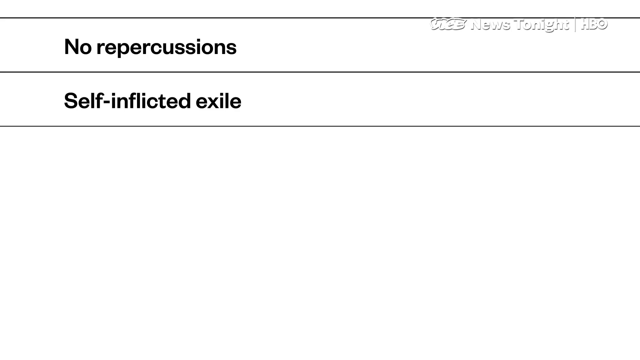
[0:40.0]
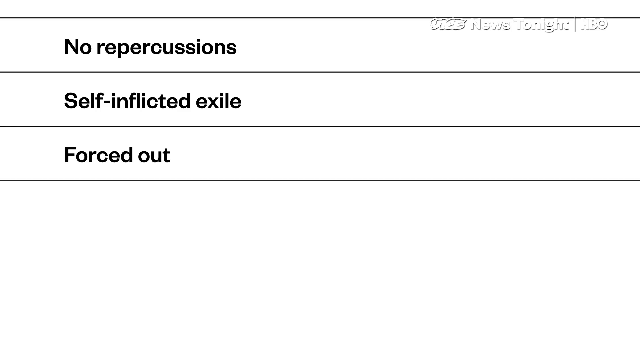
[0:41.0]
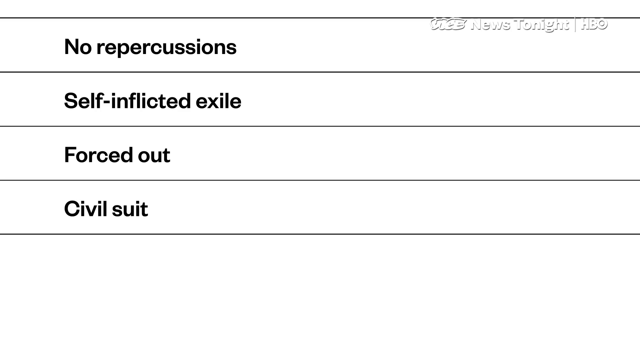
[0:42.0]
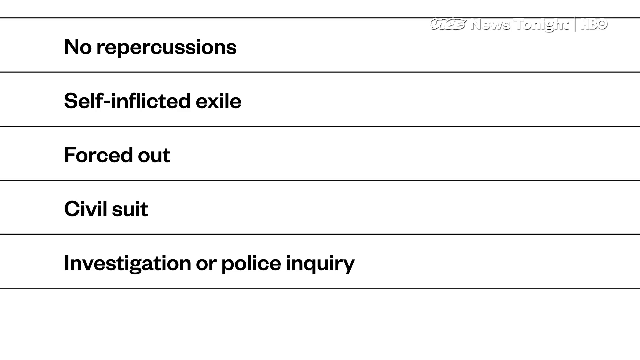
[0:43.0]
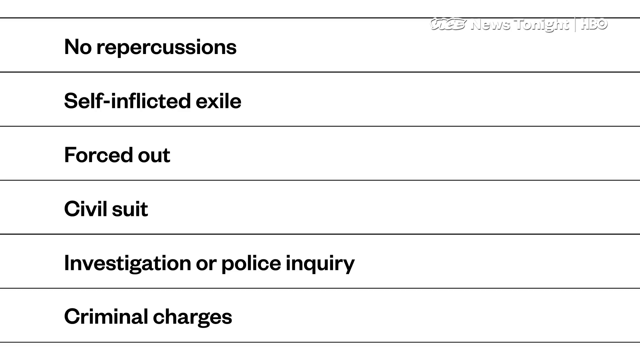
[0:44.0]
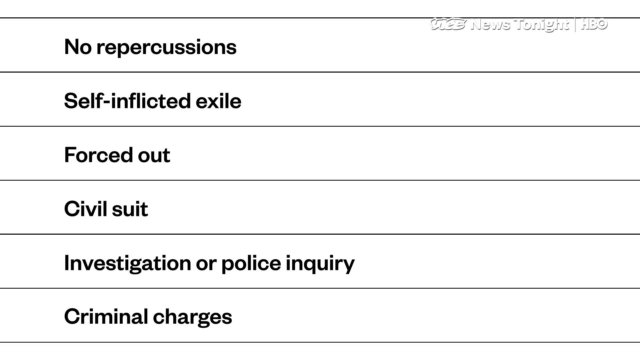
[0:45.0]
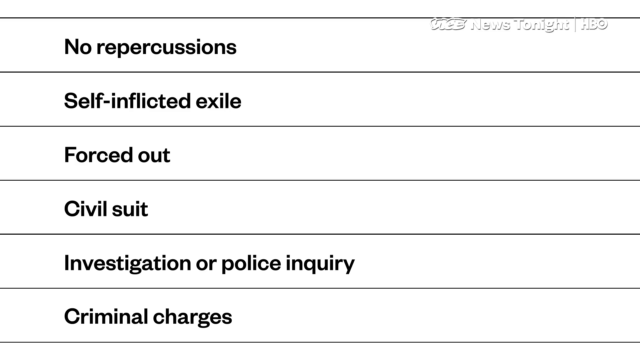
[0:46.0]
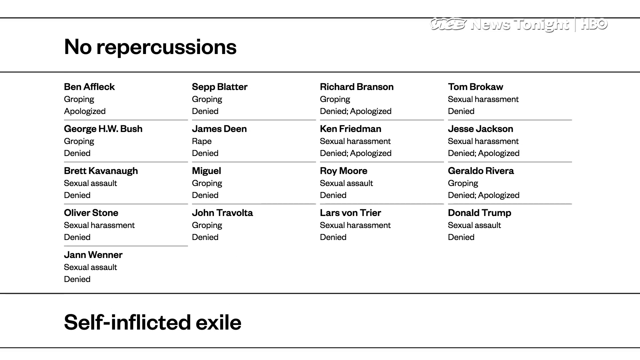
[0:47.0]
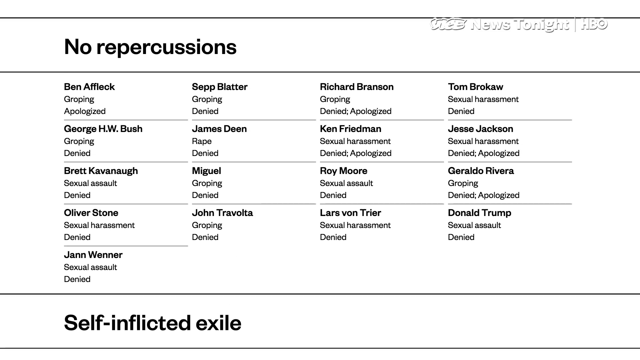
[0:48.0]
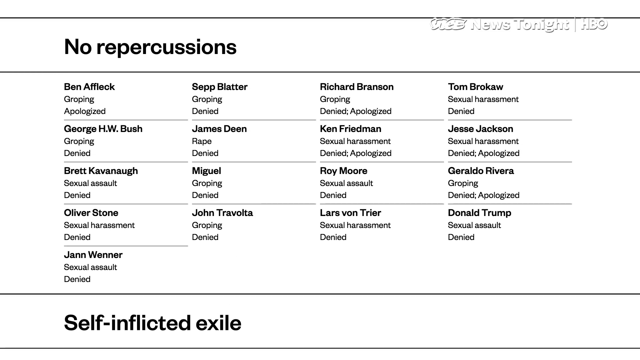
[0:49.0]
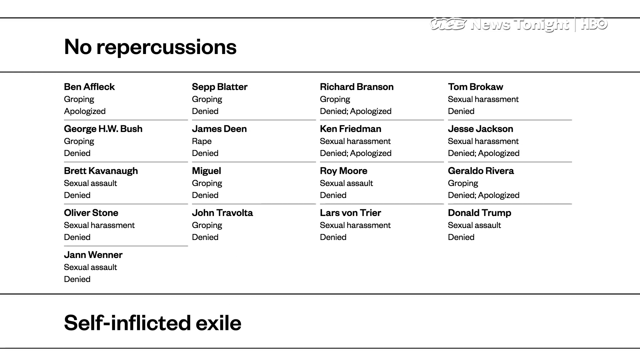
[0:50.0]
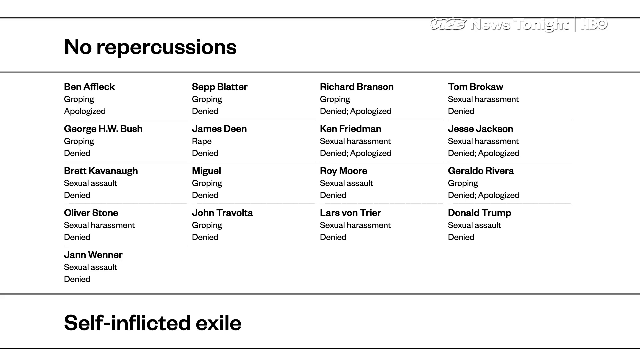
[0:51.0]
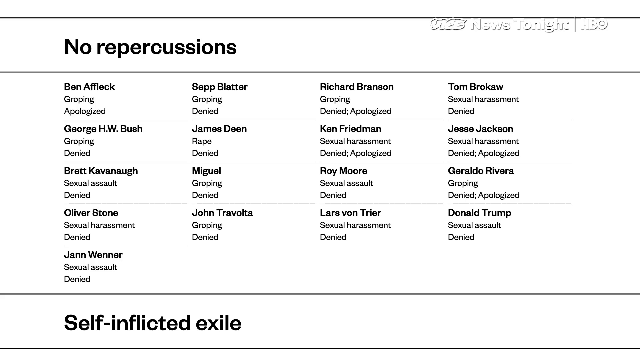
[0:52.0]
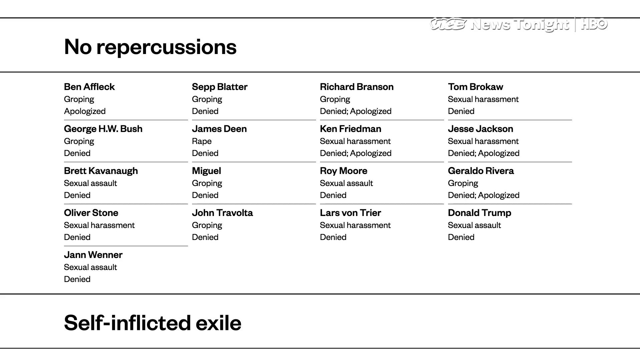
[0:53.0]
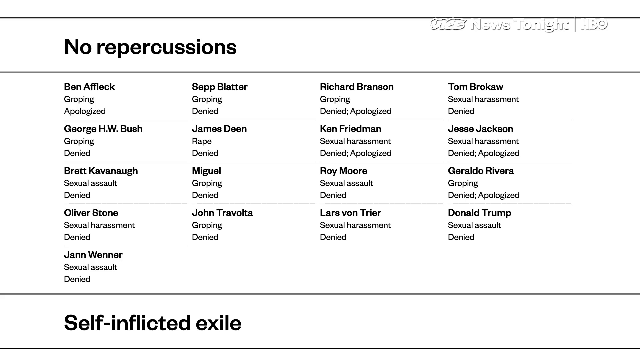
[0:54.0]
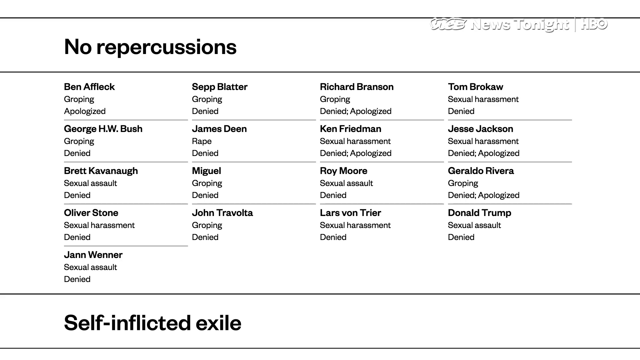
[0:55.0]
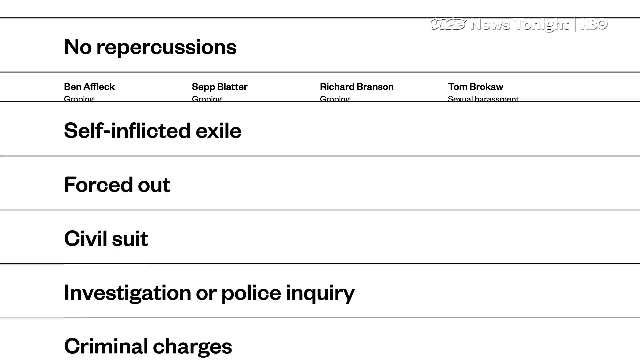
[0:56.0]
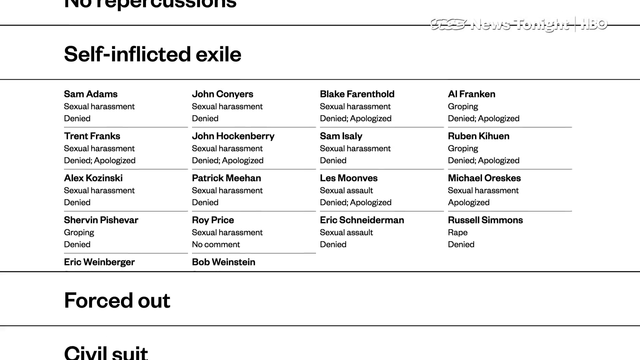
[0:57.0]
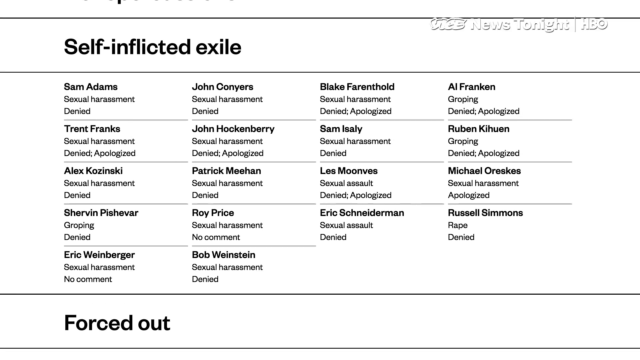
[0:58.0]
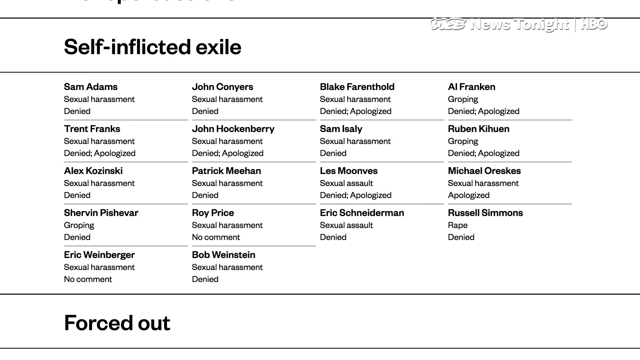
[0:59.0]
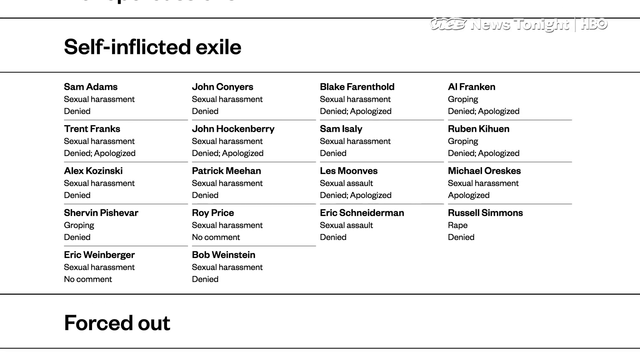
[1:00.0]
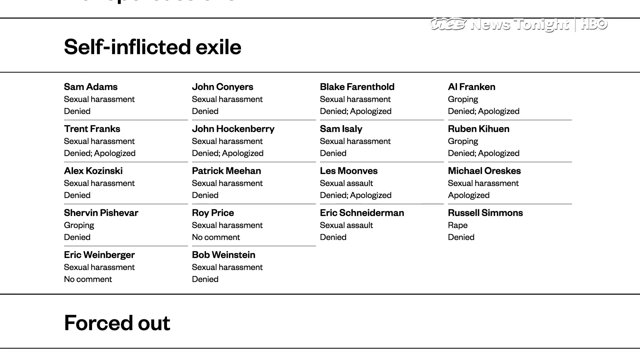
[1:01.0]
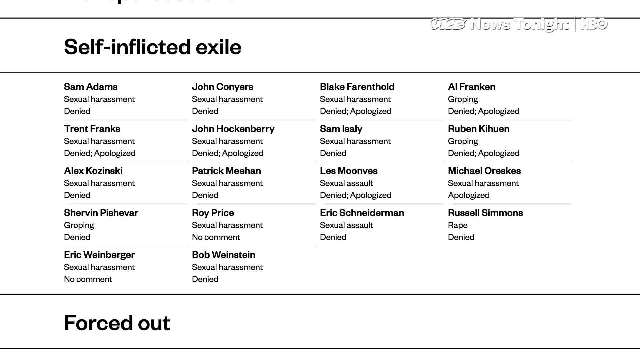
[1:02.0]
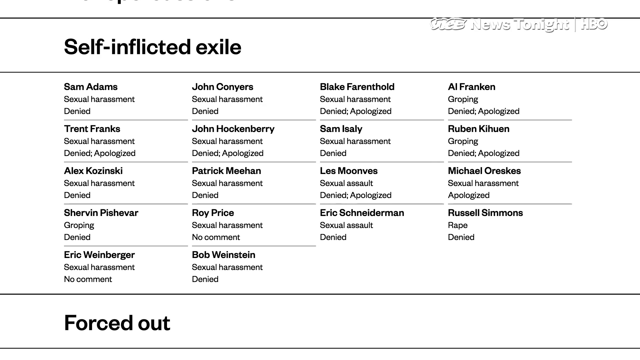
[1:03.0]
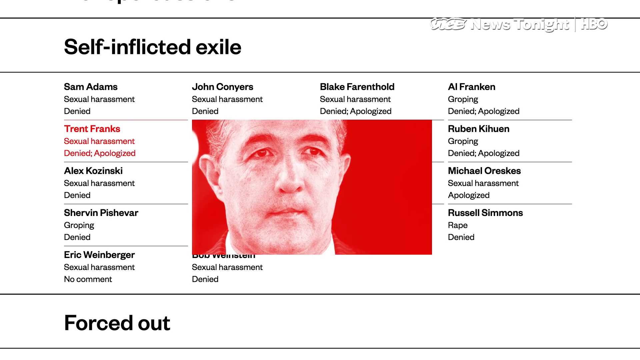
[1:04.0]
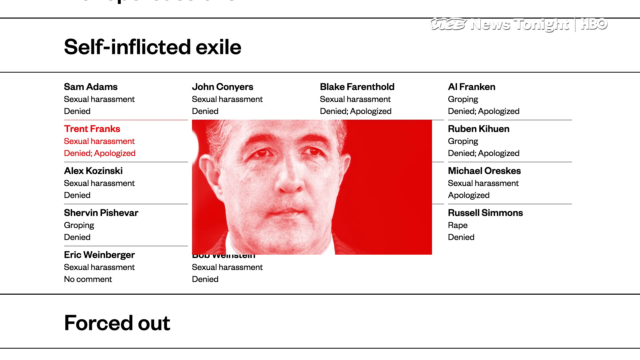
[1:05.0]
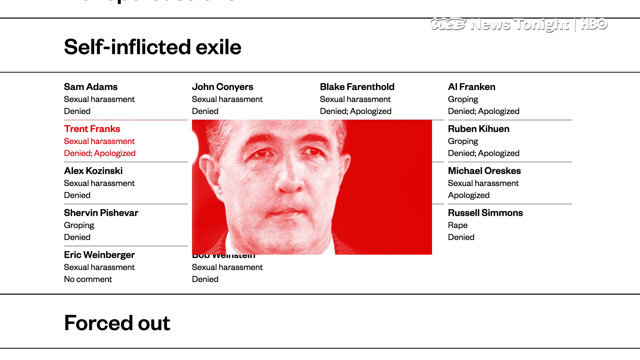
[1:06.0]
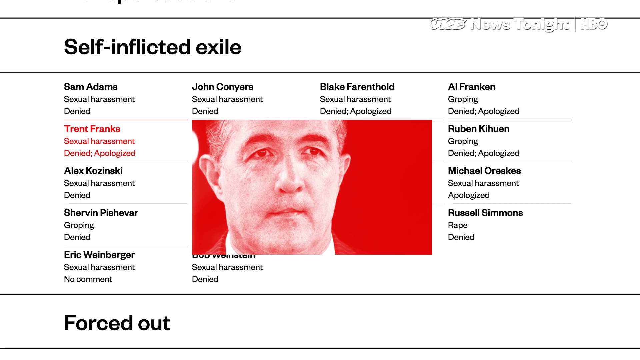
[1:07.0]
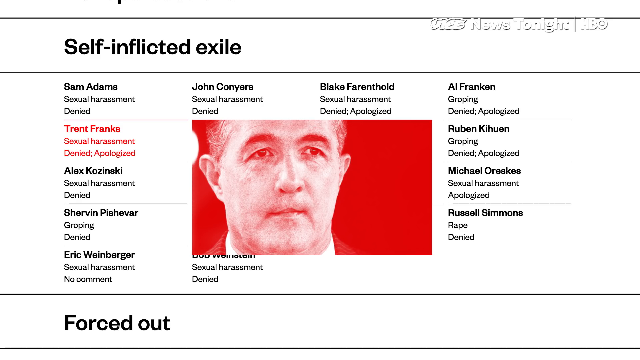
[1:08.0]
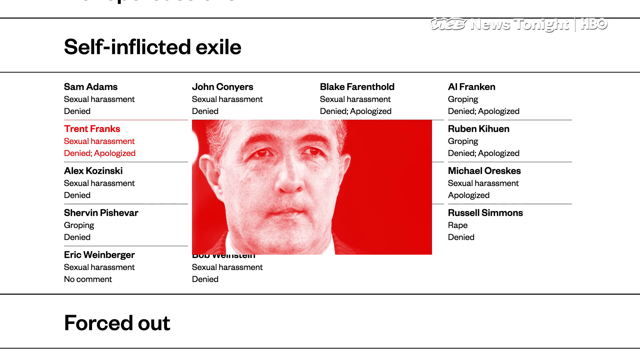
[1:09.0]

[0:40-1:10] Category captions appear: "no repercussions", "self-inflicted exile", "forced out", "civil suit", "investigation or police inquiry" and "criminal charges". Under "no repercussions" a list of names appears: Ben Affleck, George Herbert Akerbush, Brett Kavanaugh, Oliver Stone, Jan Warner, Sepp Blatter, James Dean, Miguel, John Travolta, Richard Branson, Ken Friedman, Roy Moore, Lars von Trier, Tom Brokaw, Jesse Jackson, Geraldo Rivera and Donald Trump. The caption then moves to the top of the screen and a list under "self-inflicted exile" appears: Sam Adam, Trent Franks, Alex Kozinski, Shervin Pishvar, Eric Weinberger, John Conyers, John Ackenbury, Patrick Meehan, Roy Price, Bob Weinstein, Blake Farenthold, Sam Eisele, Les Moons, Eric Schneiderman, Al Franken, Reuben Kihouan, Michael Reskis and Russell Simmons. The list stays up long enough to read, then Trent Franks is highlighted in red and a photograph of him is shown.